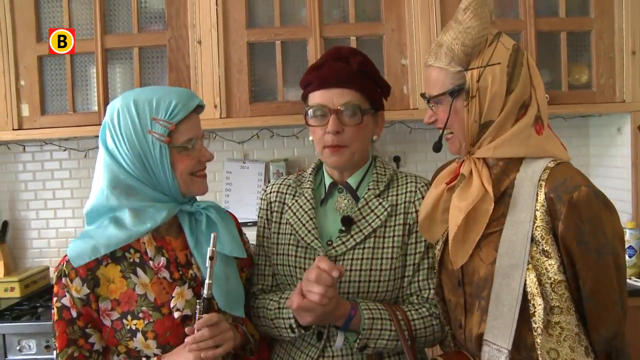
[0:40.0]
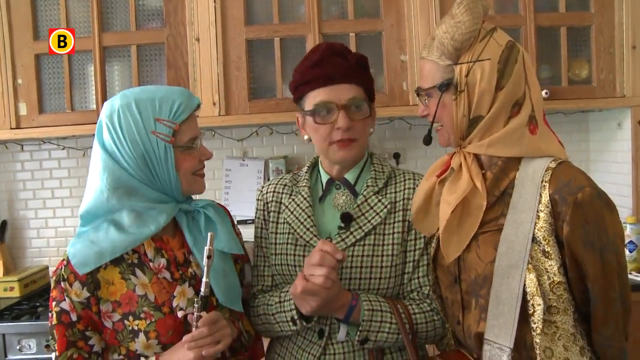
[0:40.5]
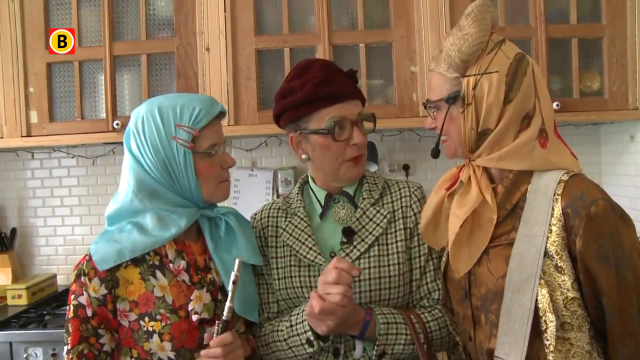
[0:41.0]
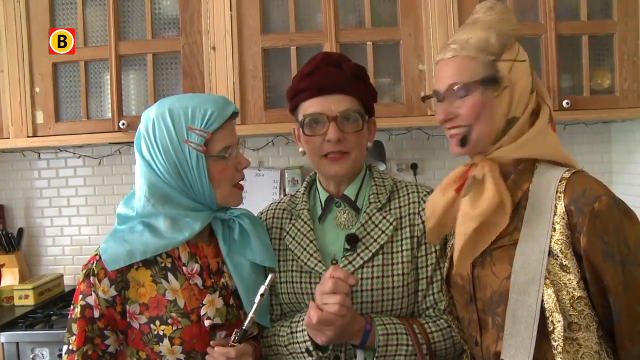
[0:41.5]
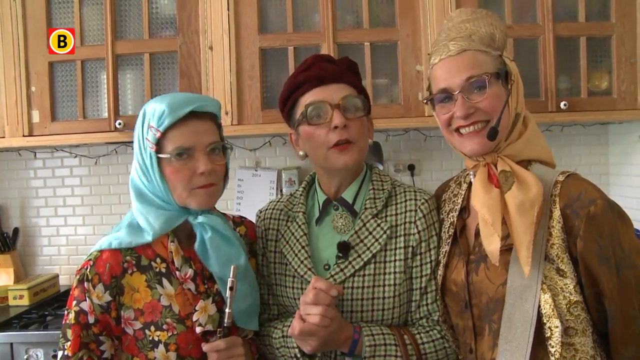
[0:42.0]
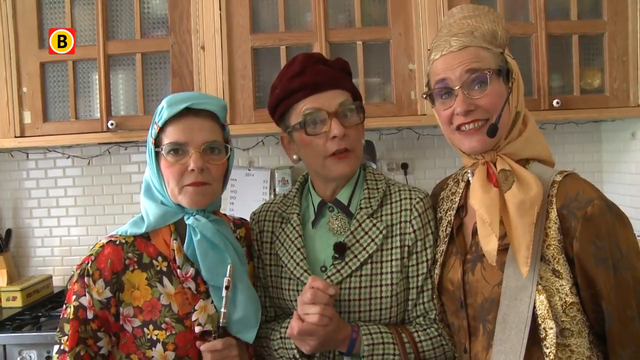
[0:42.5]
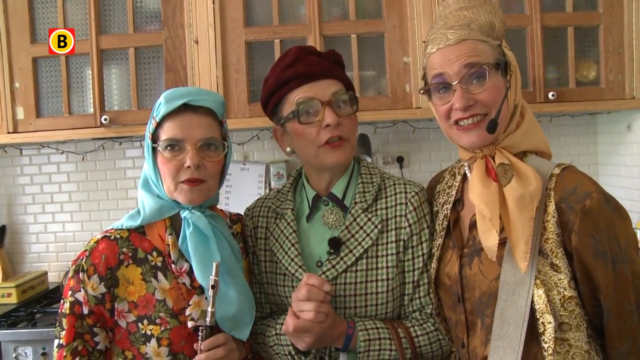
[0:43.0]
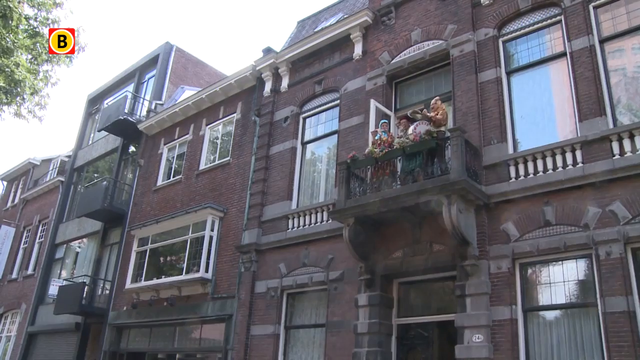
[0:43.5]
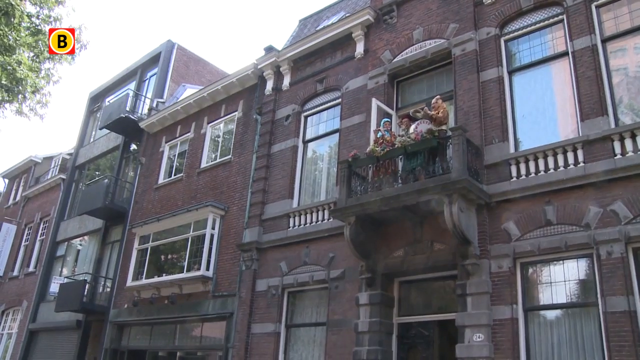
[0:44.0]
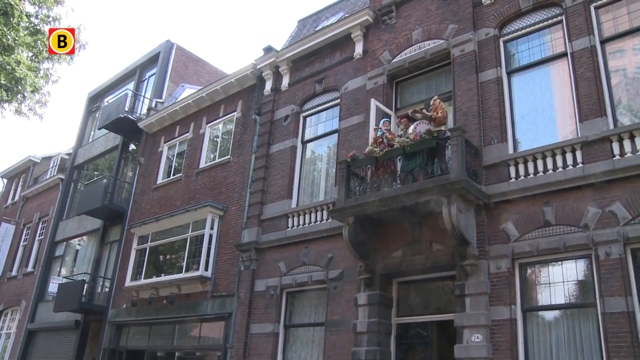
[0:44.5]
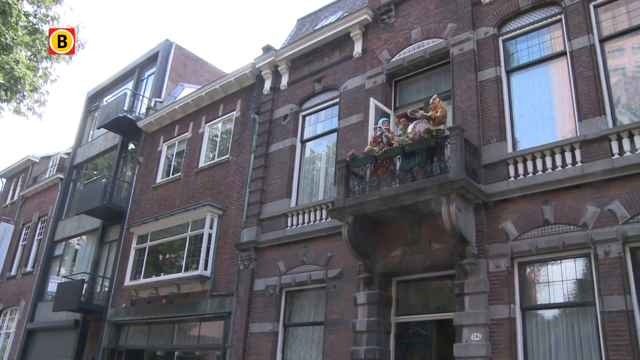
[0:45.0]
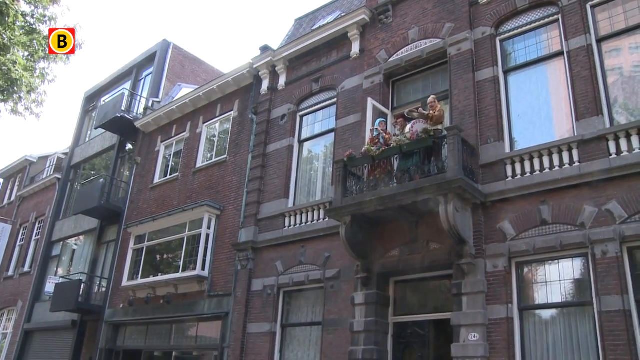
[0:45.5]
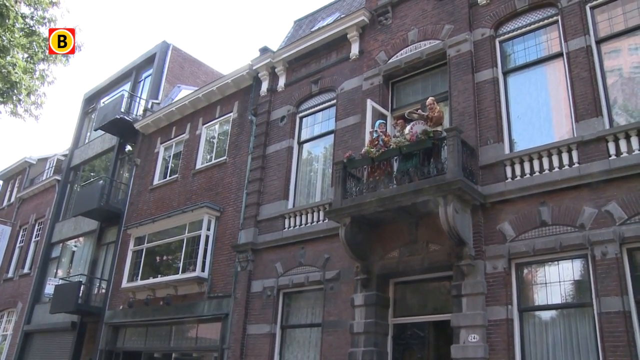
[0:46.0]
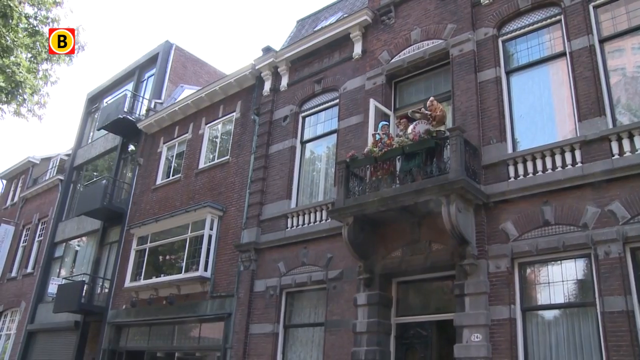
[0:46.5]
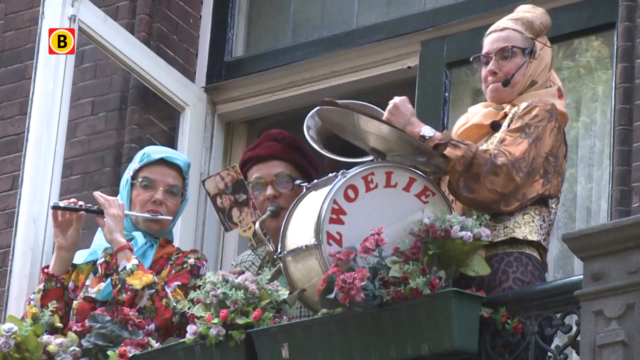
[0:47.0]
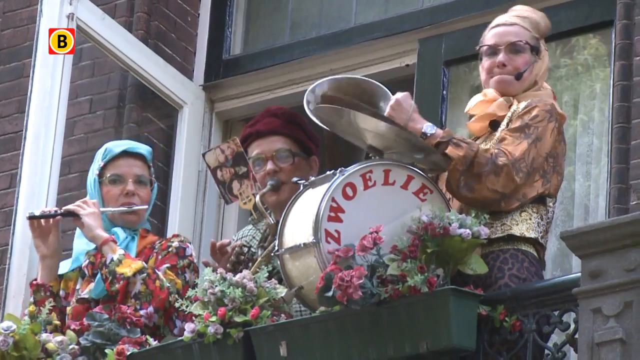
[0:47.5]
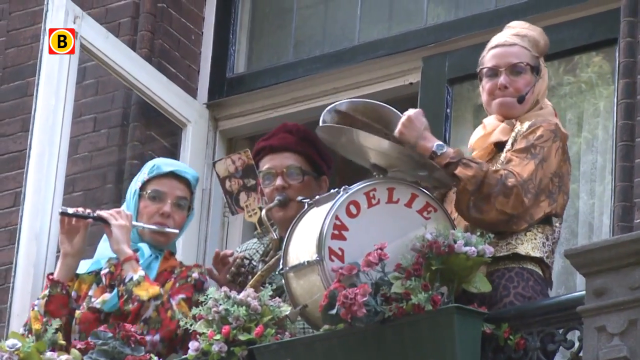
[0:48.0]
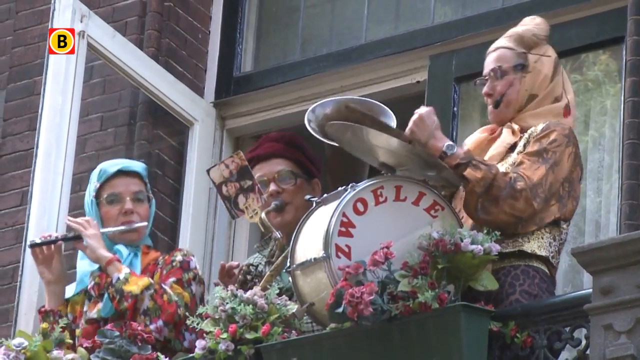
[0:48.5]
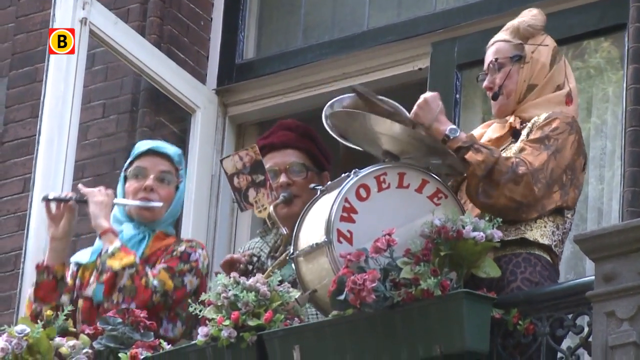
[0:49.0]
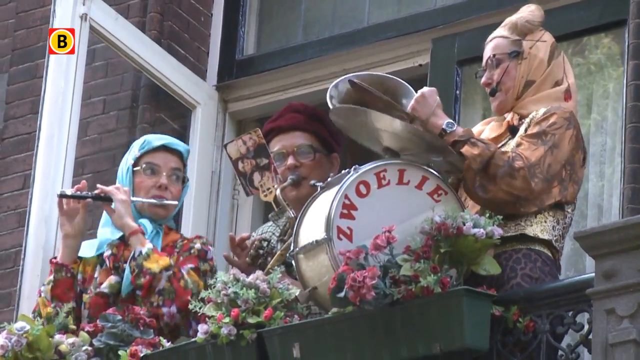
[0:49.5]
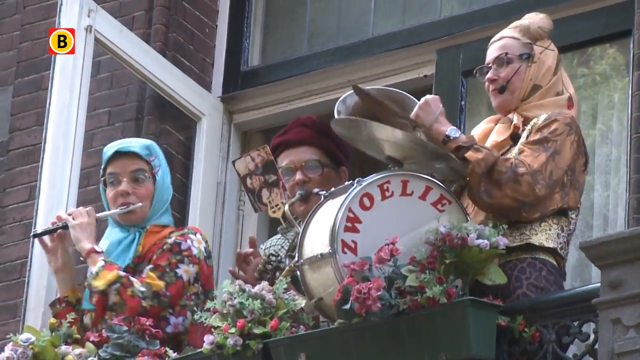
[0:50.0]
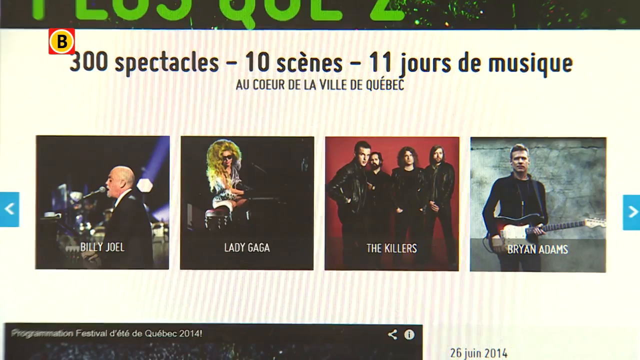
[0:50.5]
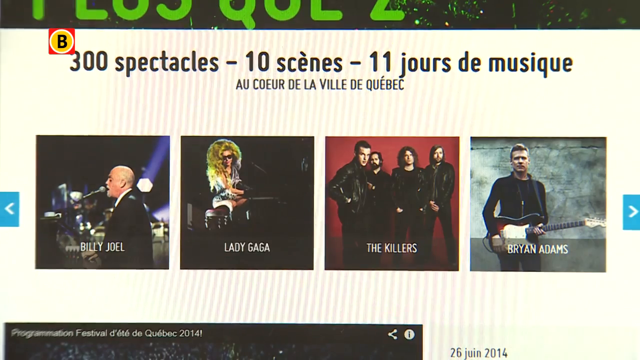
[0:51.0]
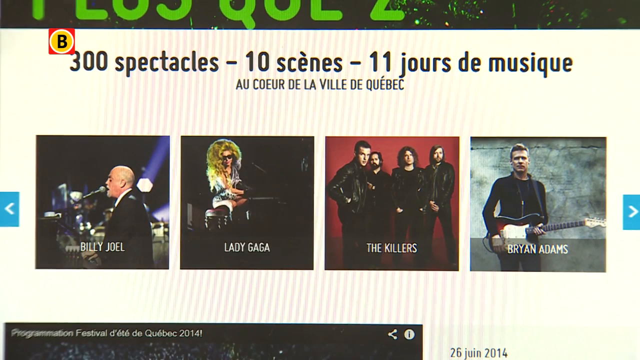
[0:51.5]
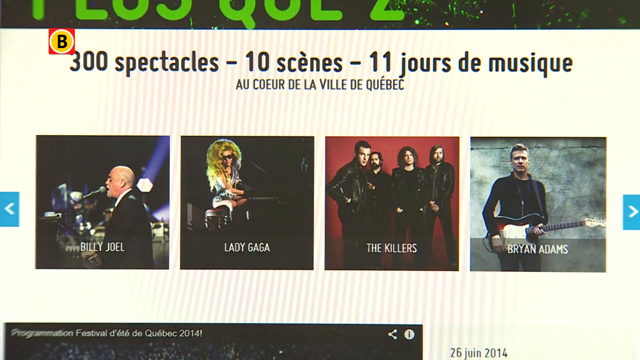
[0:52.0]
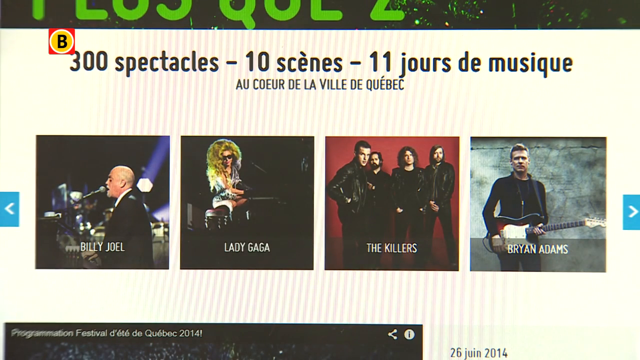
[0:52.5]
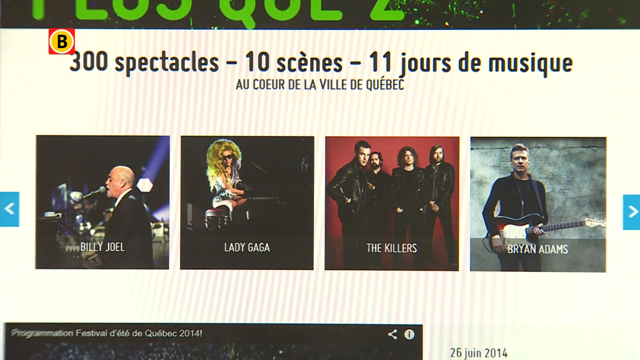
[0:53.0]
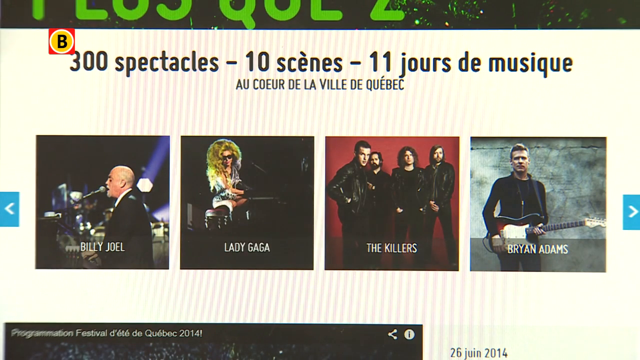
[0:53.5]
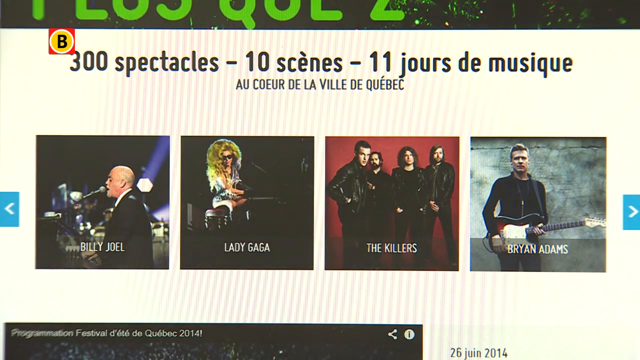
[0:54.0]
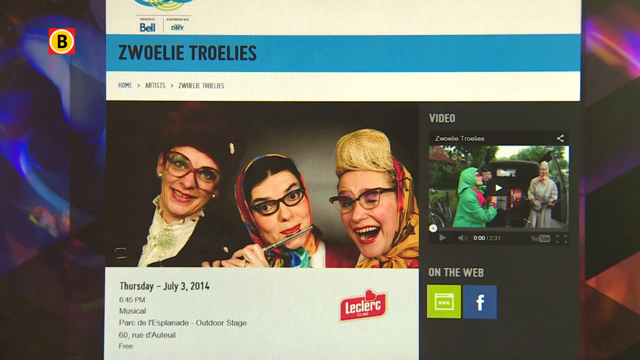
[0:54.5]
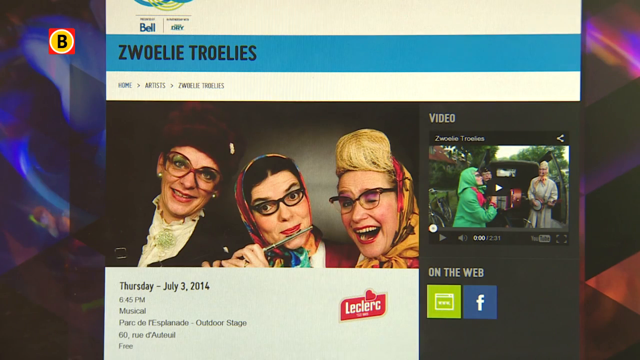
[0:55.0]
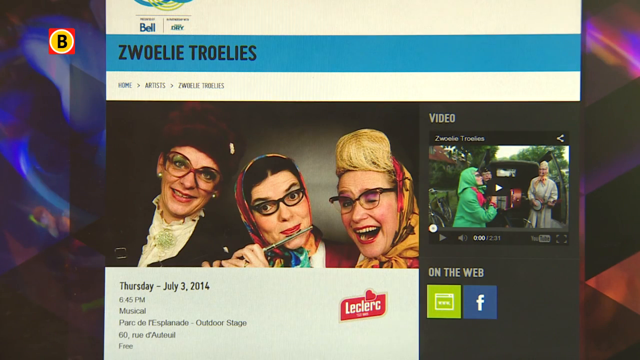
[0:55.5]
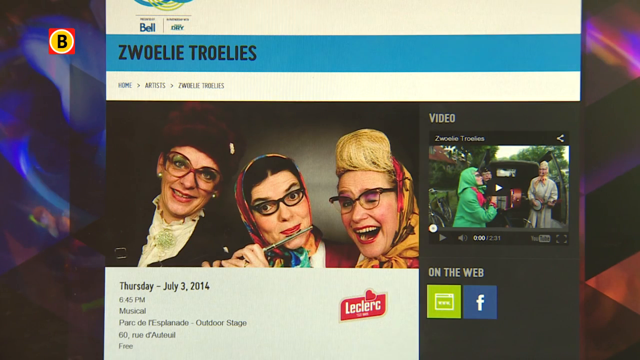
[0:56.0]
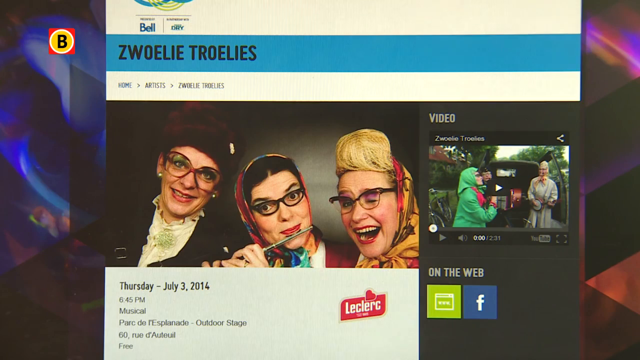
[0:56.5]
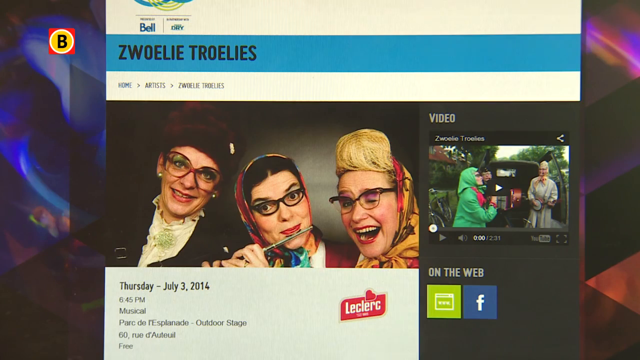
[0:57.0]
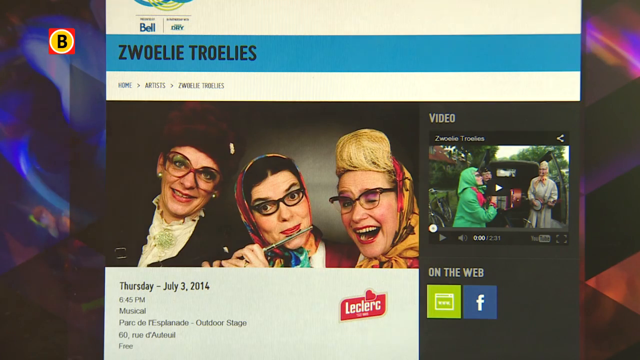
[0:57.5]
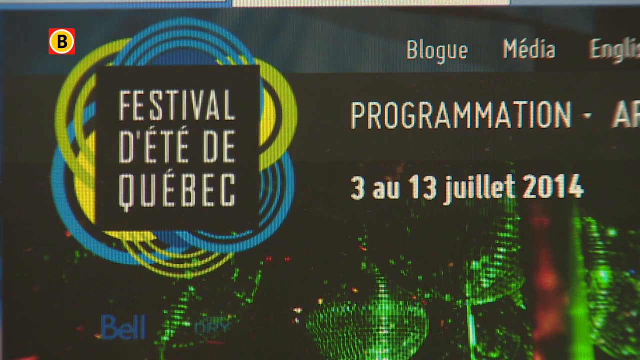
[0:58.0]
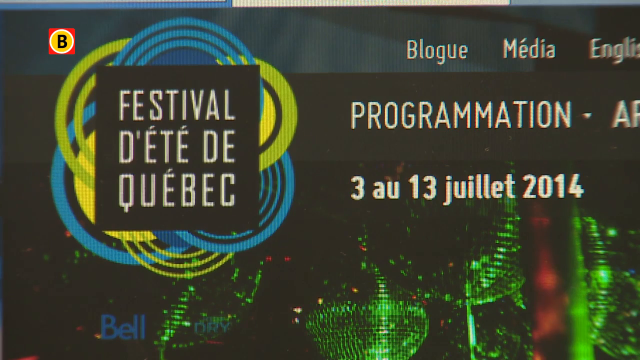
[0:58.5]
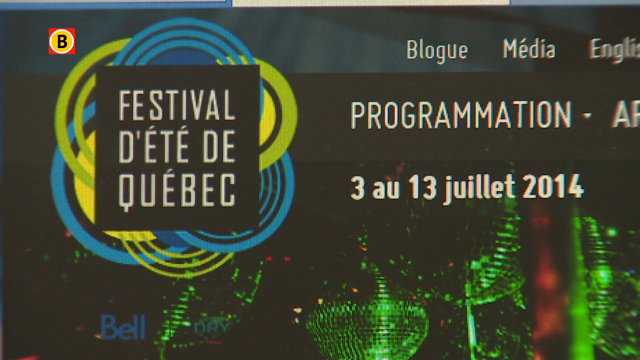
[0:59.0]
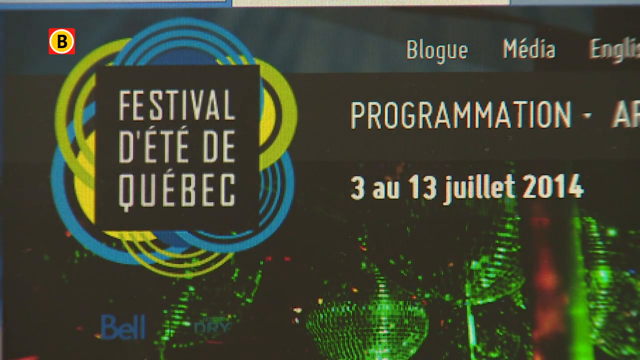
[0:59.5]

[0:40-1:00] Three women are inside a kitchen with white subway tiles on the backsplashes and light brown wooden cabinets with frosted window panes, through which various white porcelain plates and cutlery can be seen. The women are standing and talking; the one in the center seems to do most of the talking. The women on the left and right look toward her, and then they look toward the camera. The video cuts to the women playing instruments on a balcony of a two-story townhome: the one on the left plays a flute, the one in the center plays an accordion, and the woman on the right plays a small bass drum with cymbals. It cuts to a recording of a webpage showing four different bands playing soon: Billy Joel, Lady Gaga, The Killers, and Bryan Adams. It then cuts to the page for the women who were just playing on the balcony, showing that they have a show coming up on Thursday, July 3rd, 2014 at 6:45.